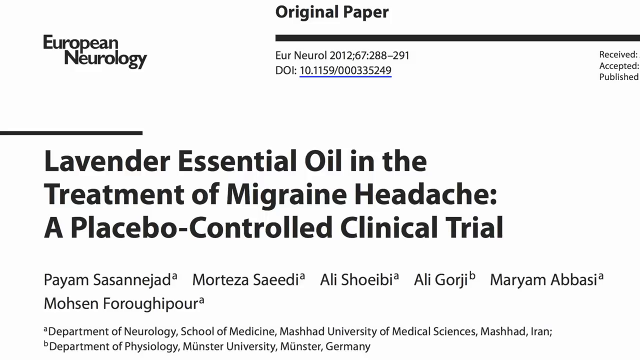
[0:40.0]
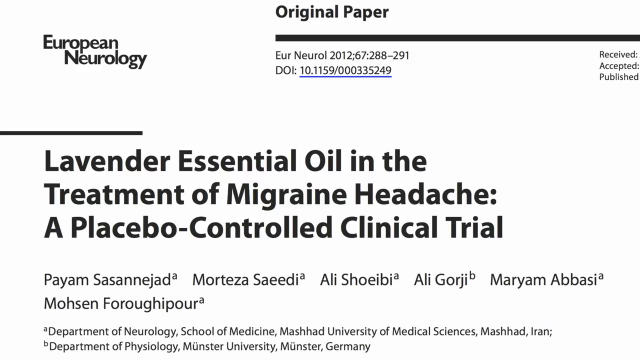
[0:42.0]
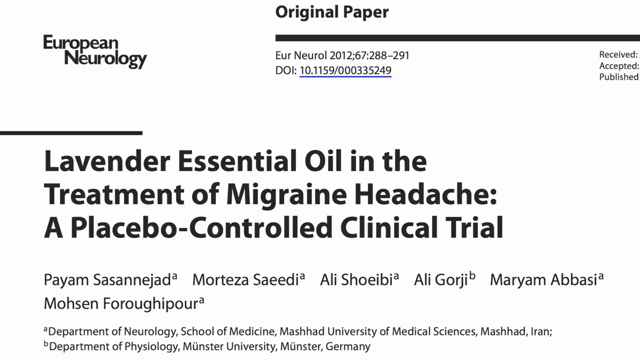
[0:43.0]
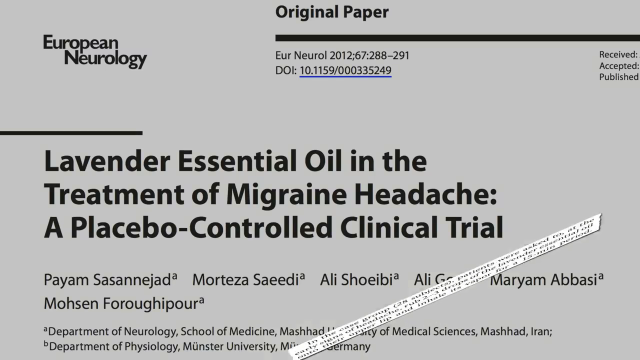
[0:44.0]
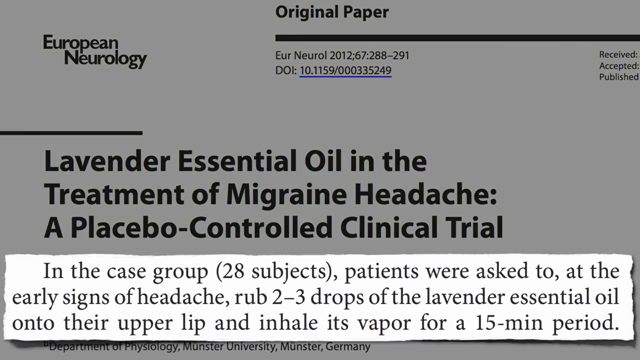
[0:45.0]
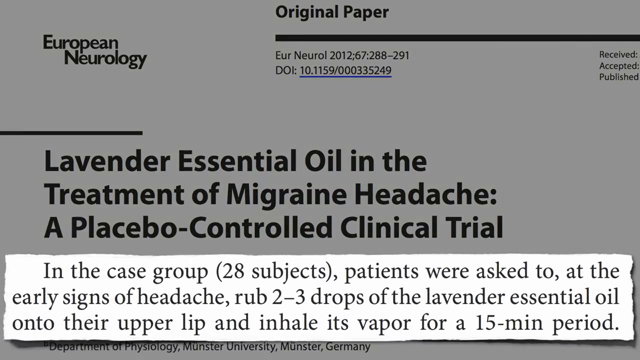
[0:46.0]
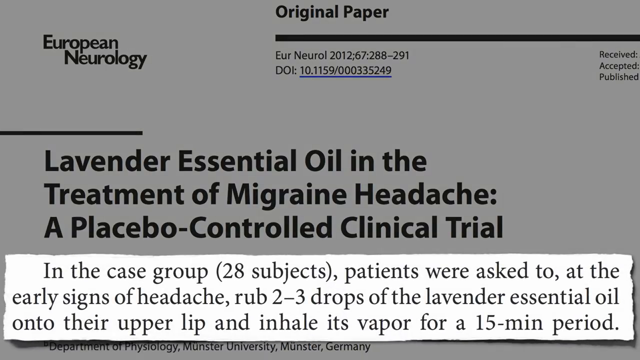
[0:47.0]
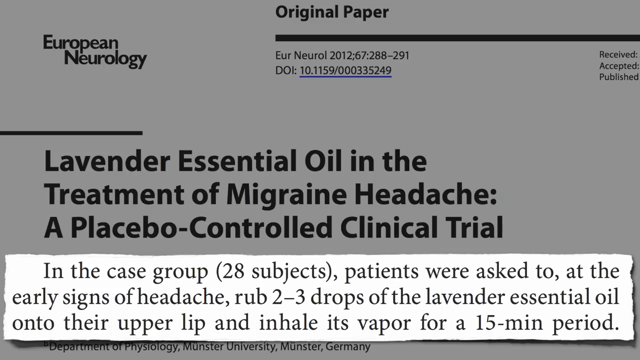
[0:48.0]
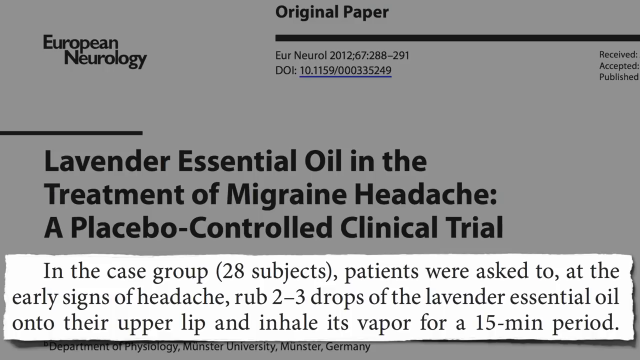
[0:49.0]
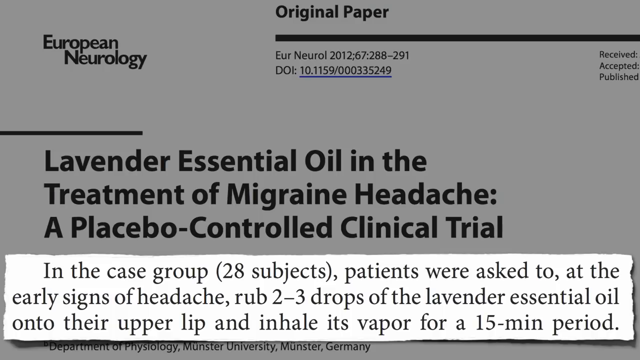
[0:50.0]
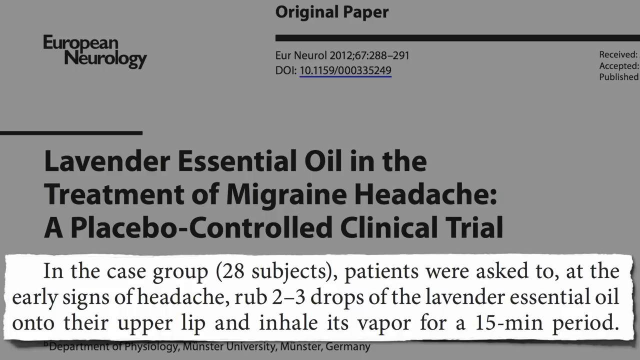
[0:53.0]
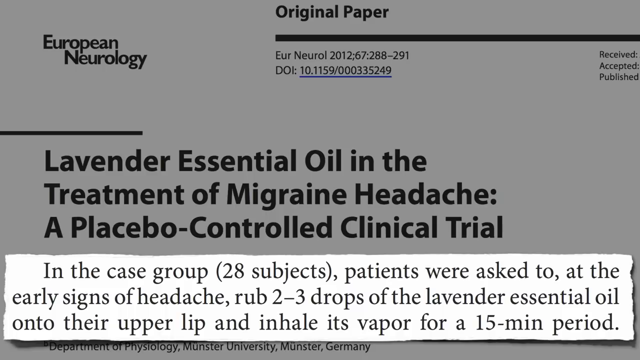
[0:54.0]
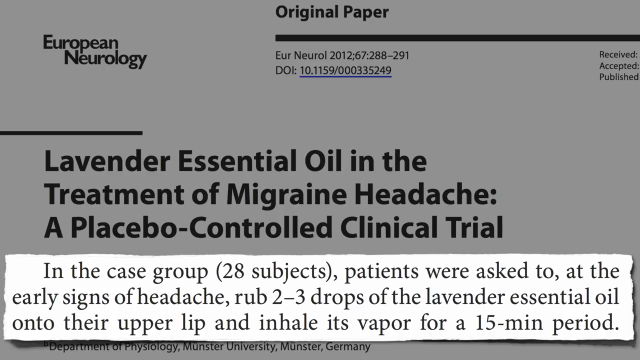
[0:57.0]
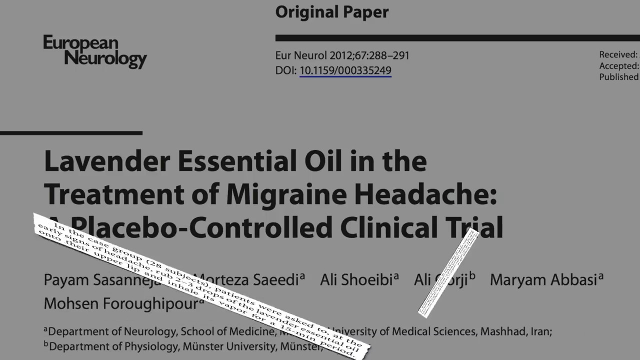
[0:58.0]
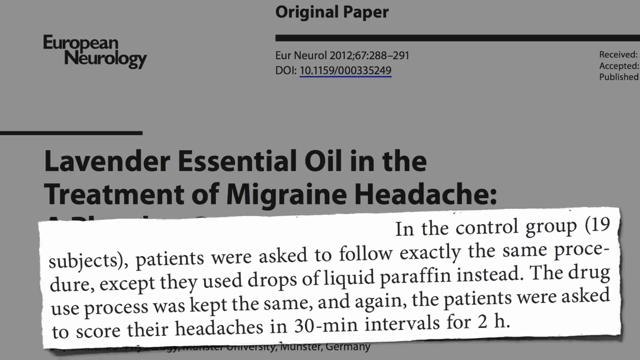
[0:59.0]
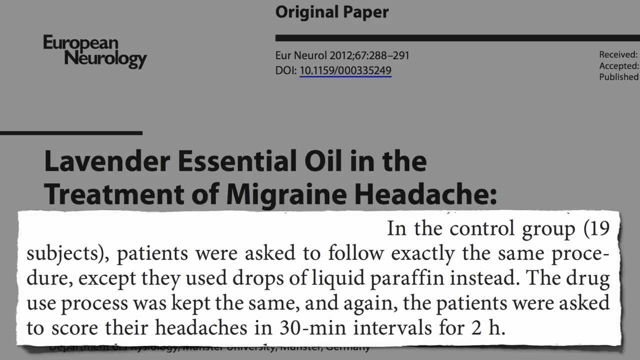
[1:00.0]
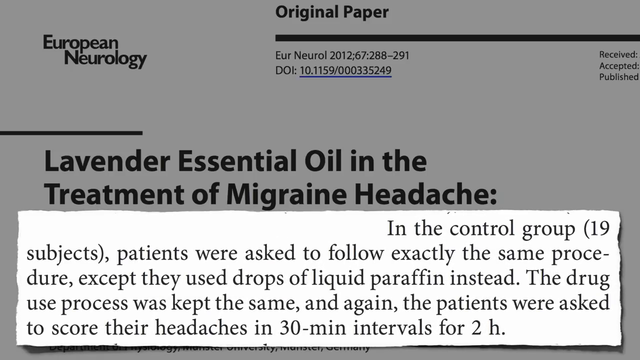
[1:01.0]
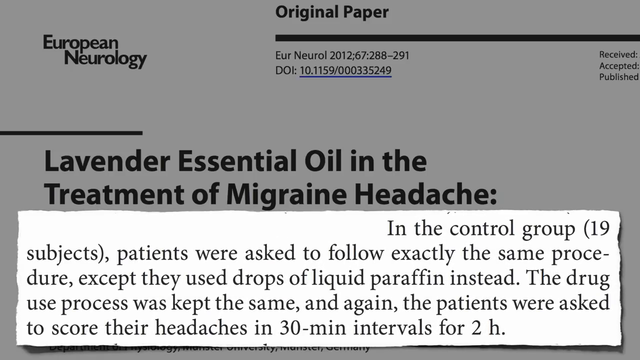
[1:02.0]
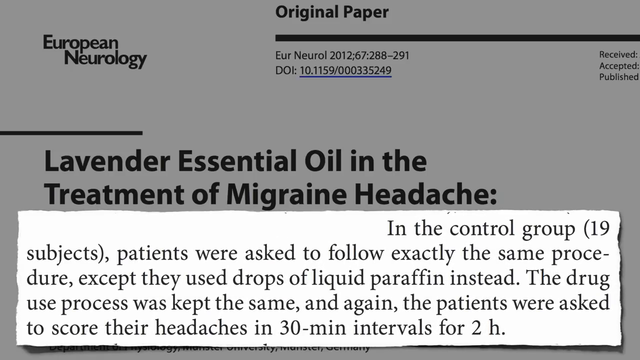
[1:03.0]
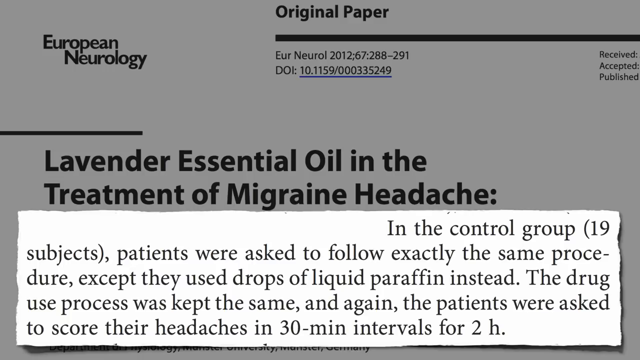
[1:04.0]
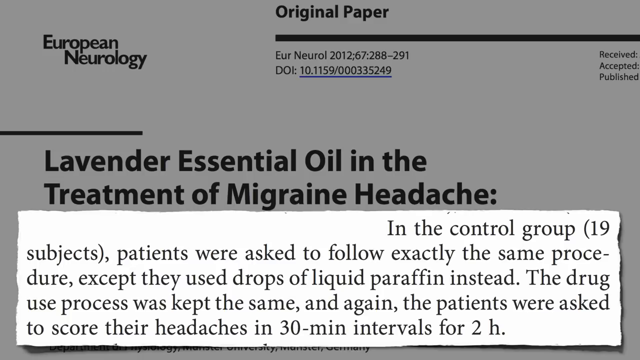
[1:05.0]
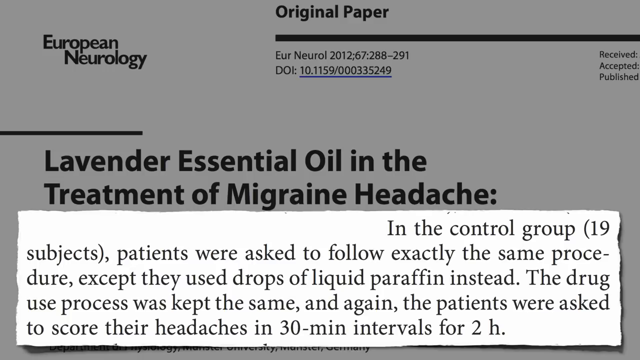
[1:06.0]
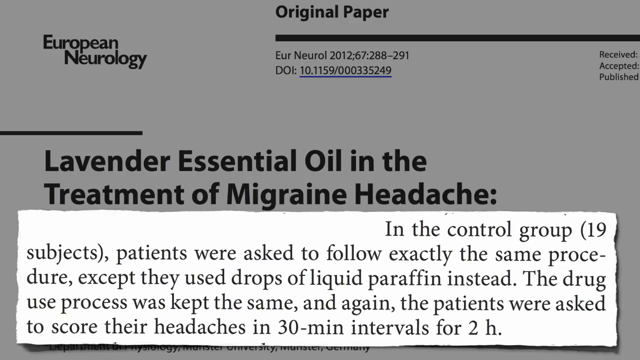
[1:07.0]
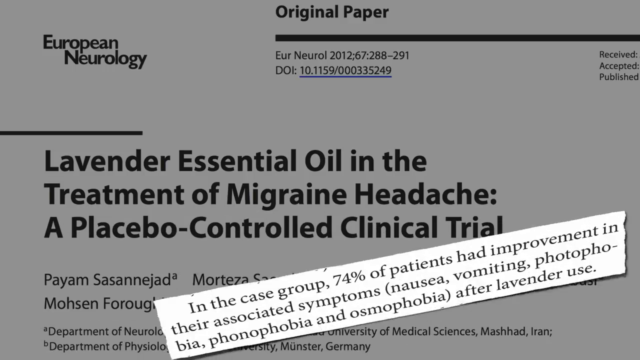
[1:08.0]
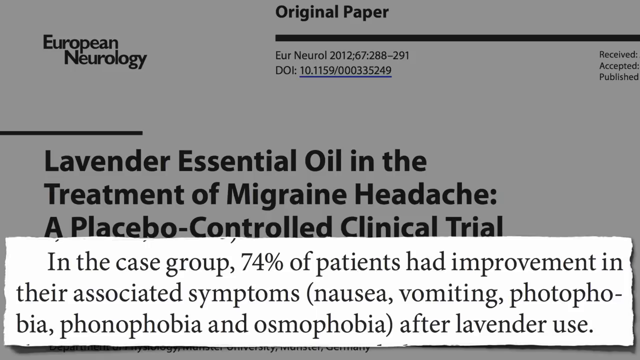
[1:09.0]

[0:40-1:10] The article about the placebo-controlled clinical trial of lavender essential oil in the treatment of migraine is shown. Part of the article is enlarged again and flashed up on the screen: it describes the case group of 28 subjects, who were asked at the early signs of a headache to rub two or three drops of lavender essential oil on their upper lip and inhale its vapour. The next enlarged part states that a control group of 19 subjects were asked to follow the same procedure except that they used drops of liquid paraffin. Another item then pops up and disappears very quickly. All of the articles are set on a white screen with black font.